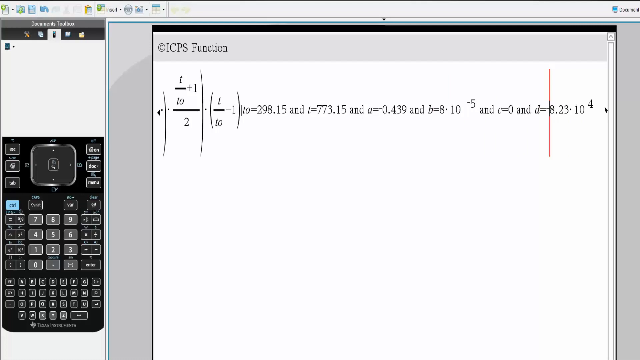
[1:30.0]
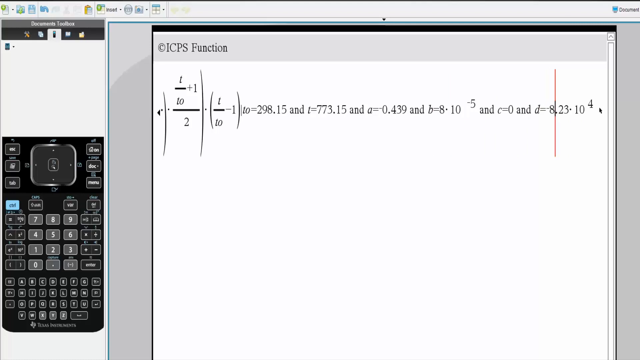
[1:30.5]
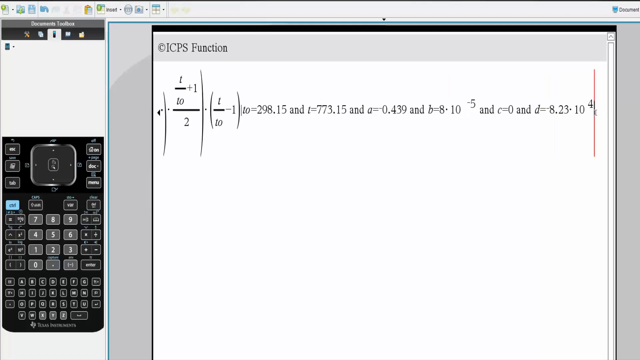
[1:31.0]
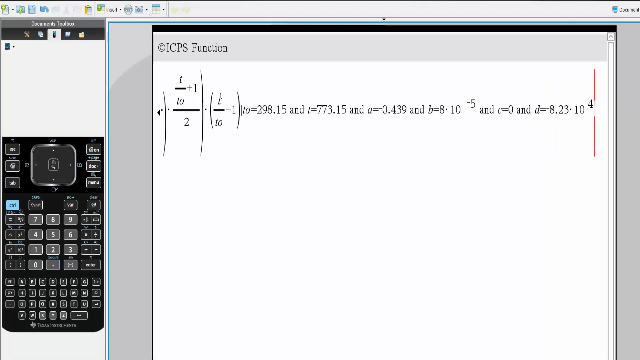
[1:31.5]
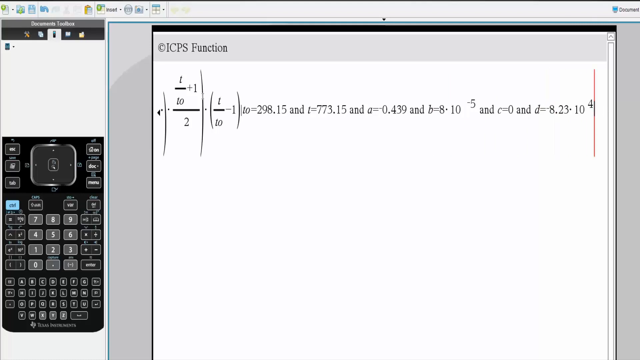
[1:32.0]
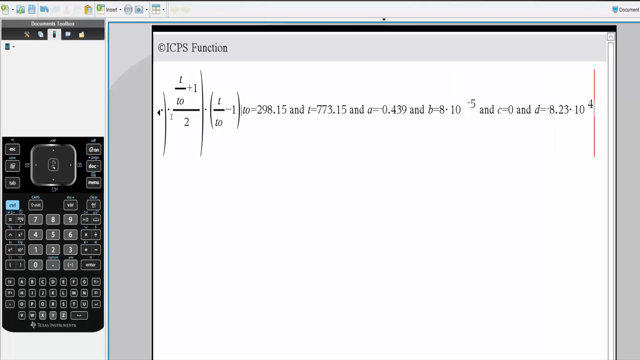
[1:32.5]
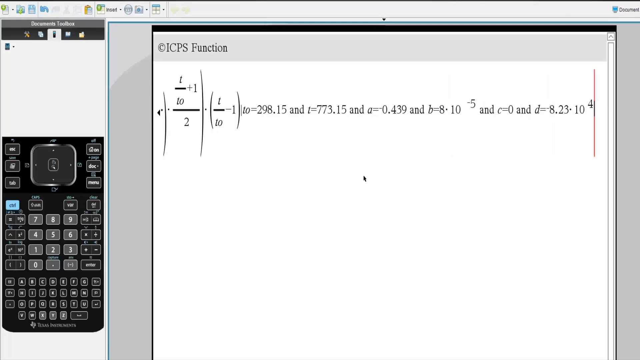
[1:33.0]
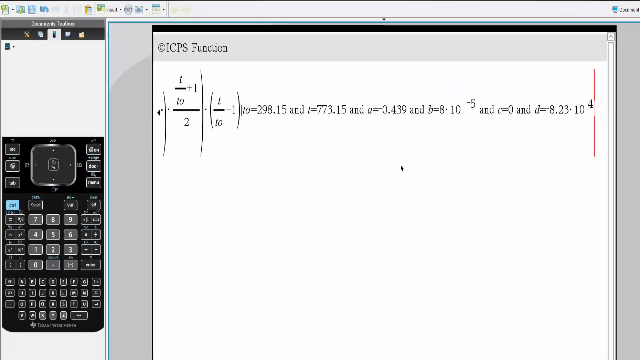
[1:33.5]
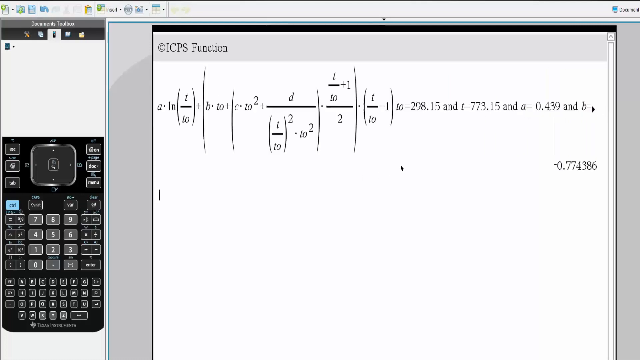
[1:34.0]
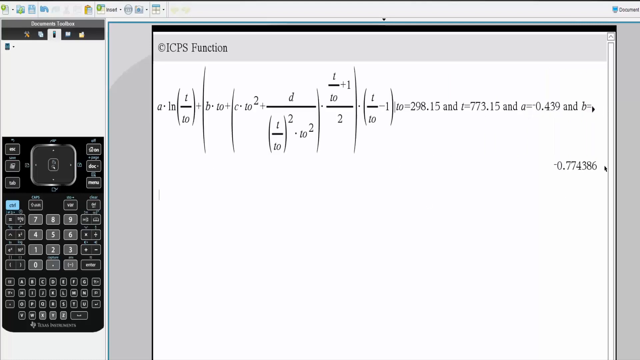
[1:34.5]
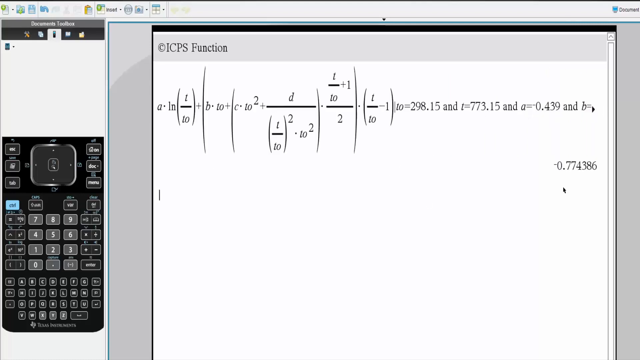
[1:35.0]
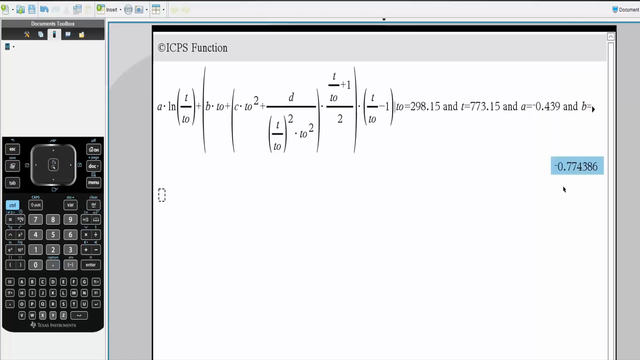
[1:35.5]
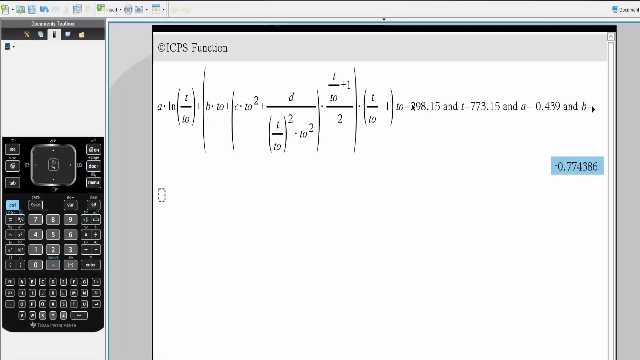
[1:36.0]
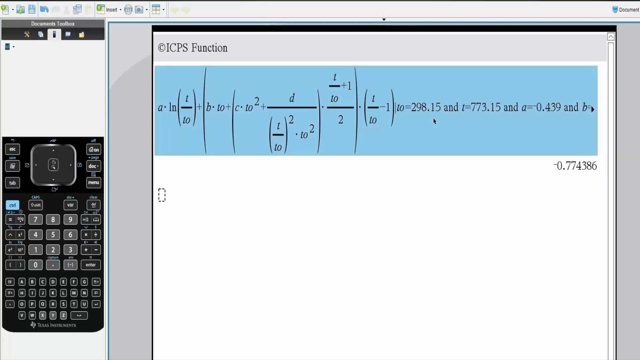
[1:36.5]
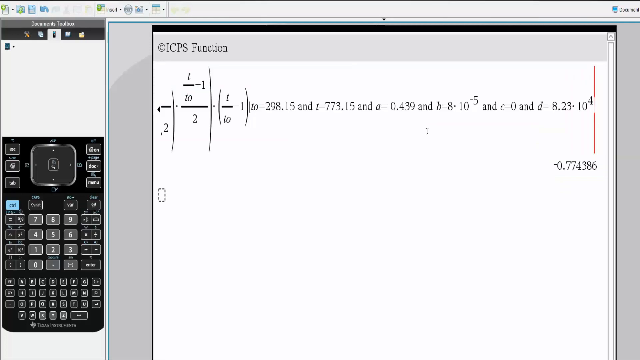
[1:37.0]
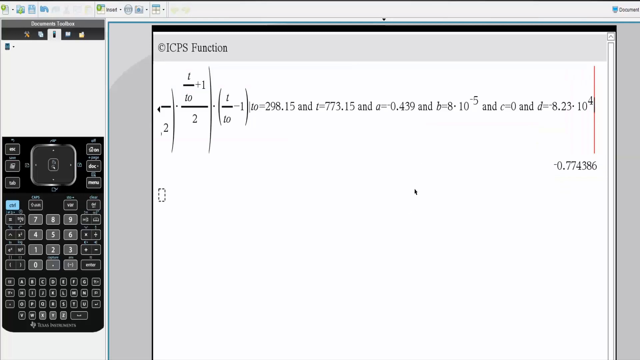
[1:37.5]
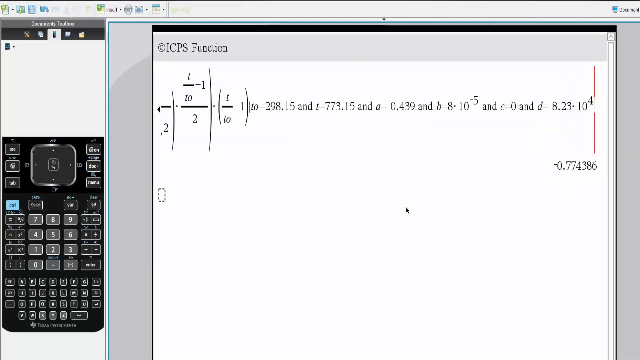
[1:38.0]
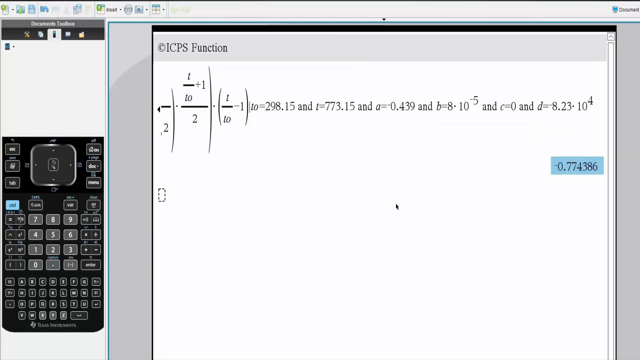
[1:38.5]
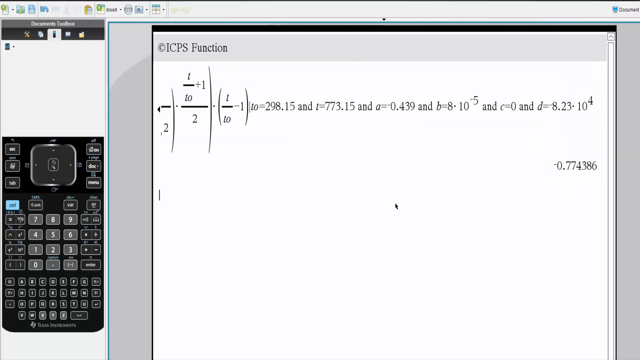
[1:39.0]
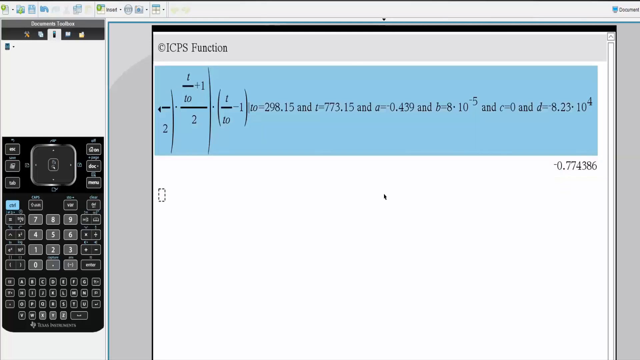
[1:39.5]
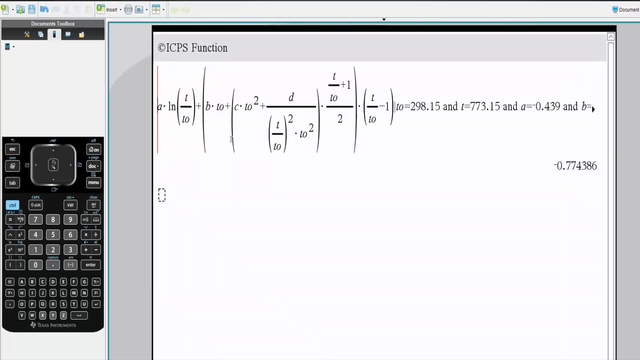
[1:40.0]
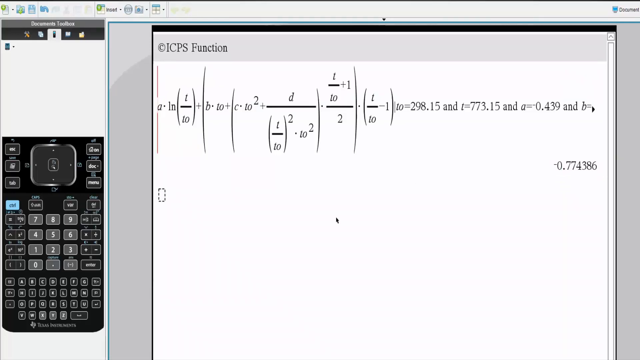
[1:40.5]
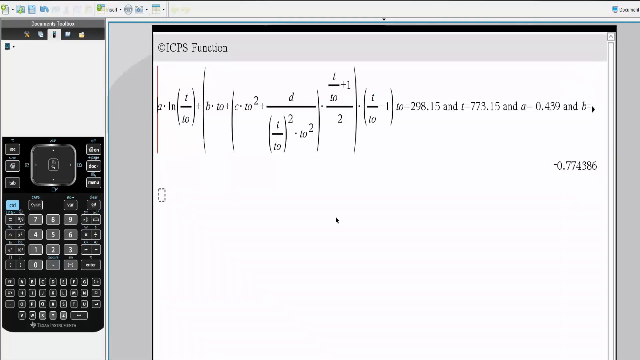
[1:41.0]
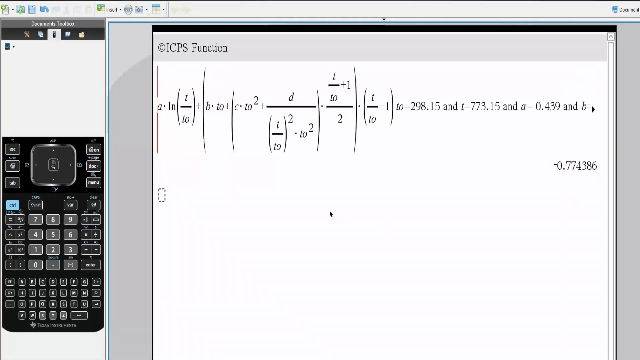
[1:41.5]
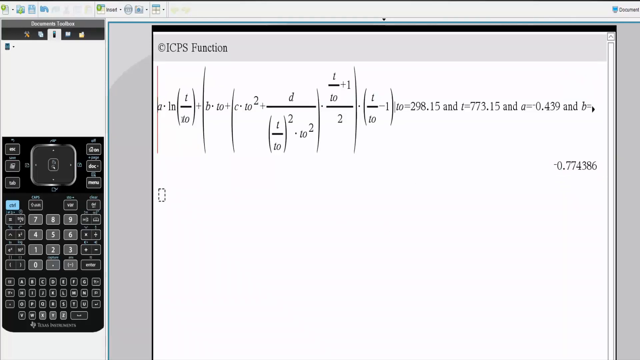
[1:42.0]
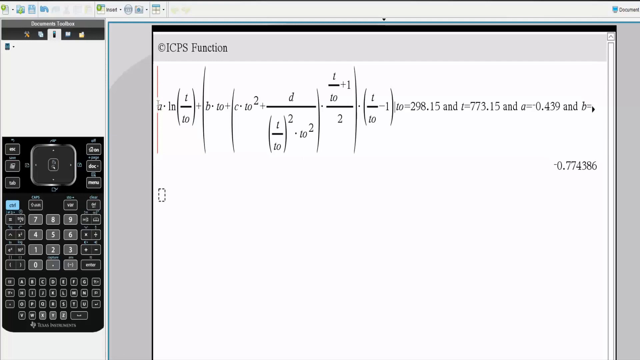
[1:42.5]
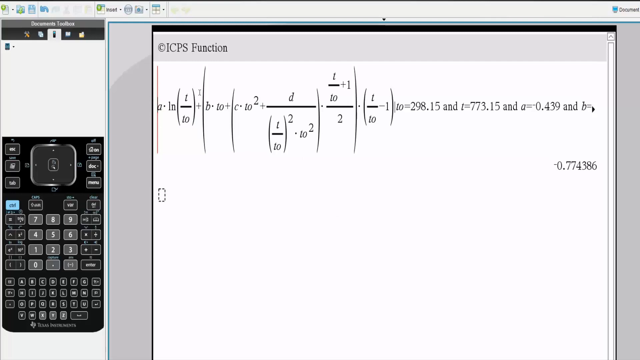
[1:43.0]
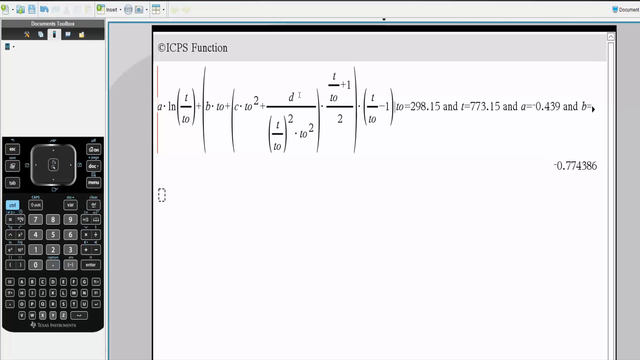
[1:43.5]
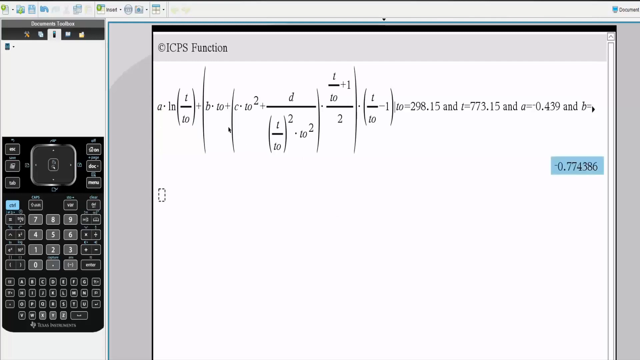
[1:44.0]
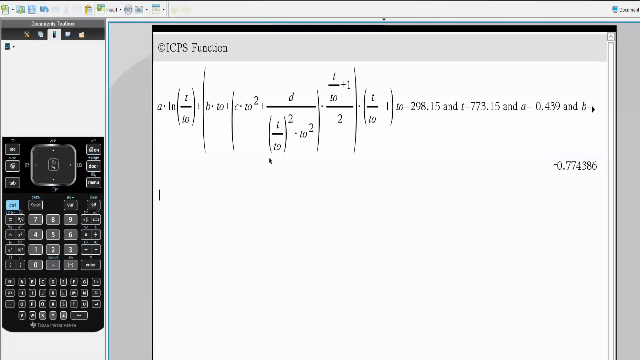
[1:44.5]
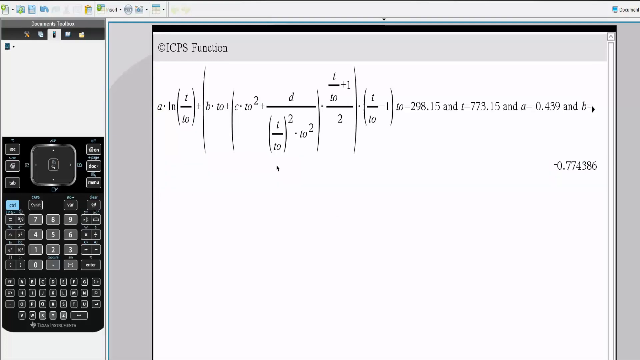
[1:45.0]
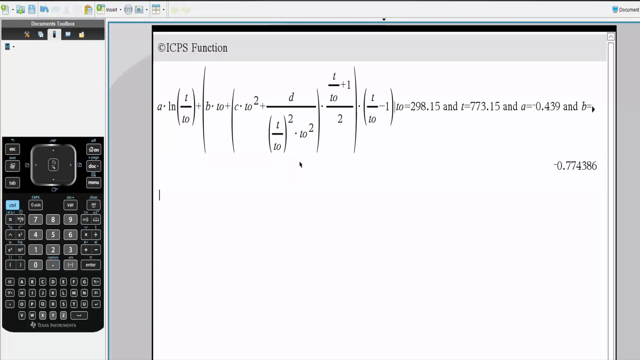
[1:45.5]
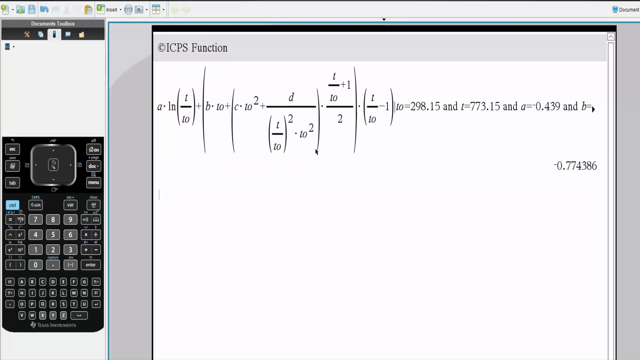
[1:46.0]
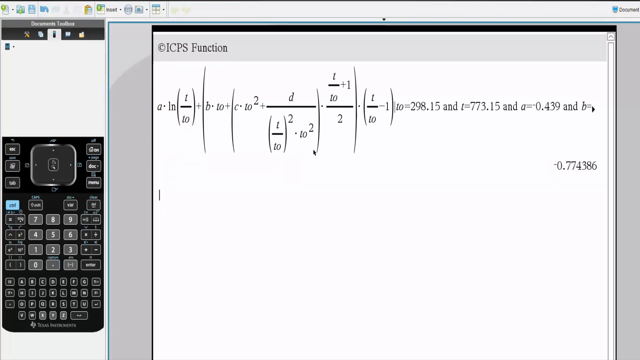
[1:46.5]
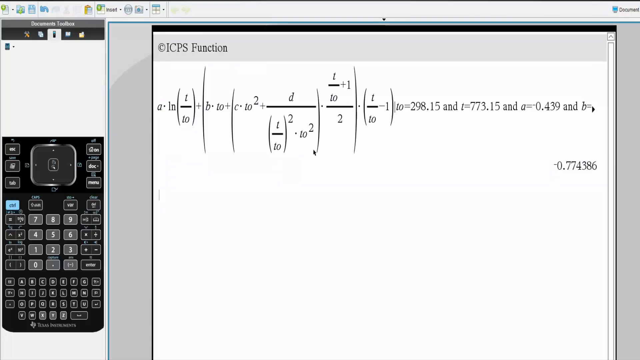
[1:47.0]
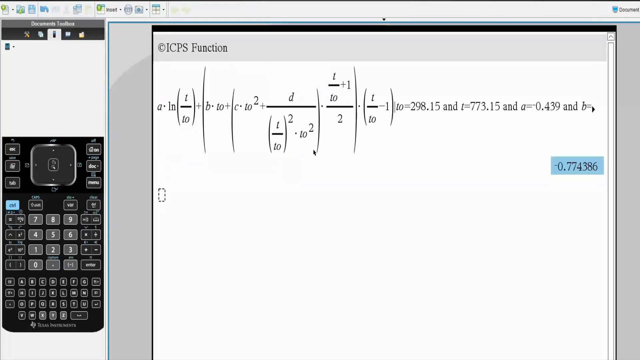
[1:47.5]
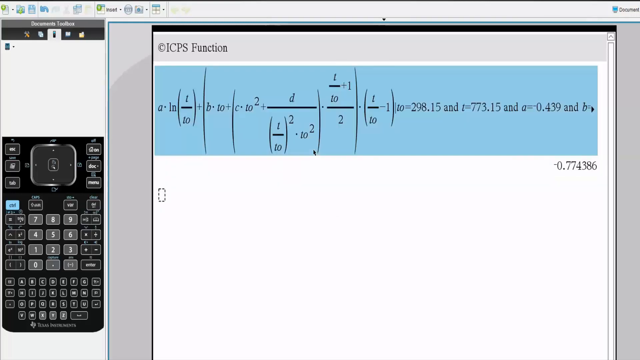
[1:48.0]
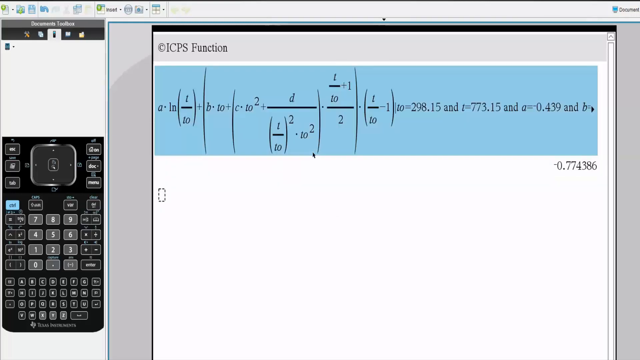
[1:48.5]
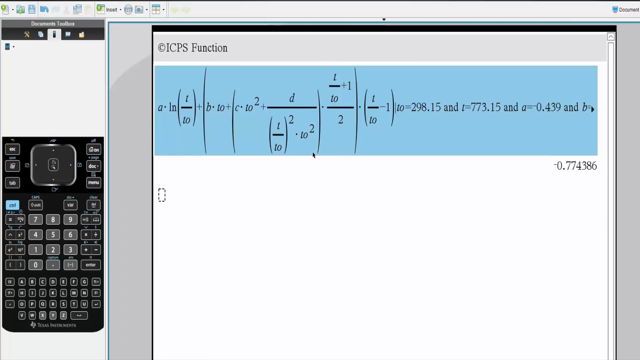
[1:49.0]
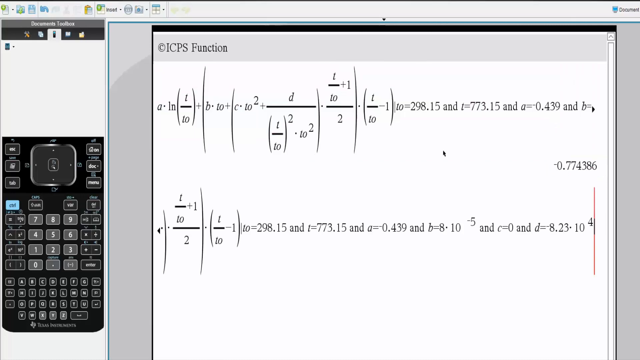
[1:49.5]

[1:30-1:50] The calculator remains on the left-hand side, with the formula and the variables on the right-hand side. The cursor continues to highlight different sections of the formula and different variables. The formula and the variable definitions extend well past the right-hand side: T0, T, and A have definitions on the main screen, and scrolling to the right shows definitions for B, C, and D. The cursor highlights certain definitions, apparently while explaining what they mean and how they relate to the overall formula.